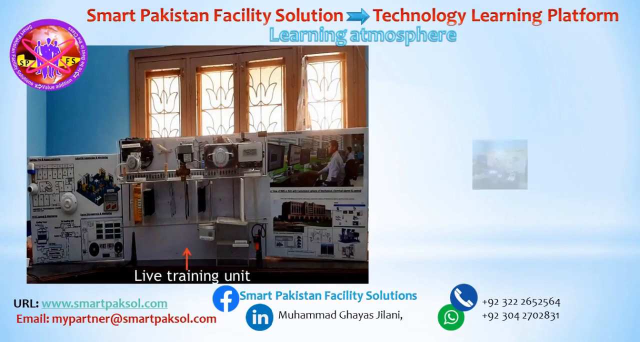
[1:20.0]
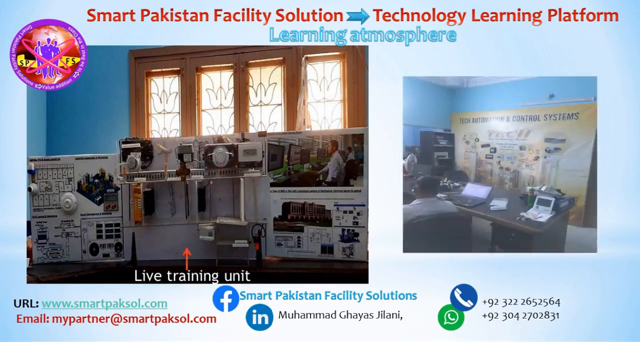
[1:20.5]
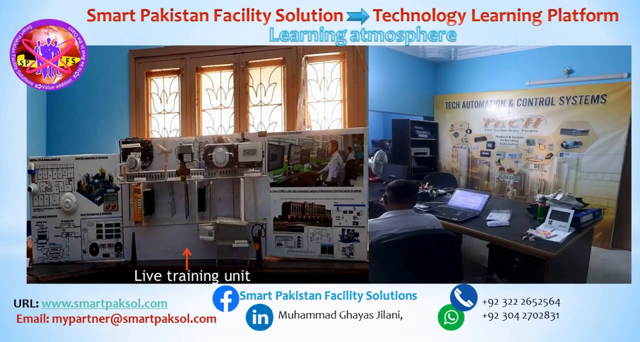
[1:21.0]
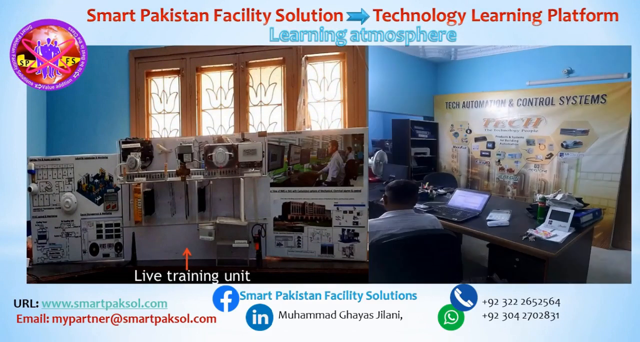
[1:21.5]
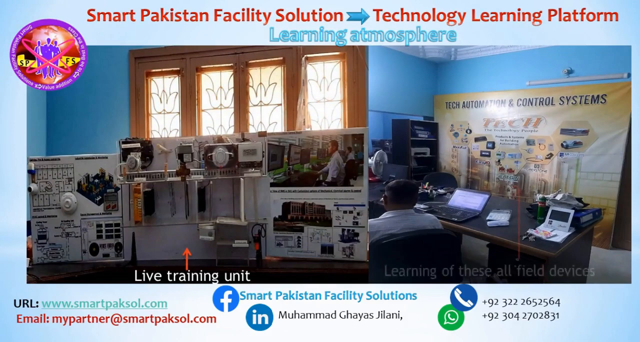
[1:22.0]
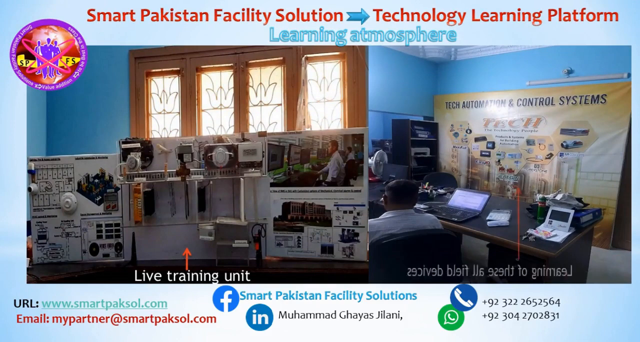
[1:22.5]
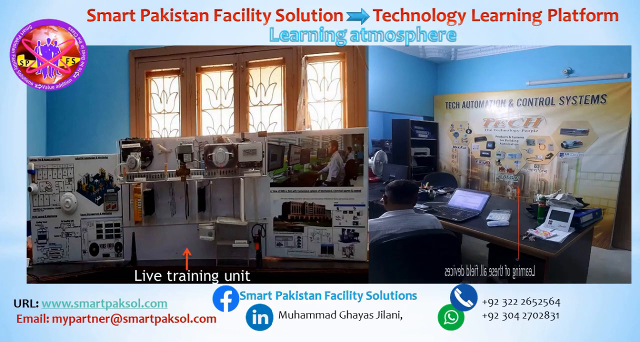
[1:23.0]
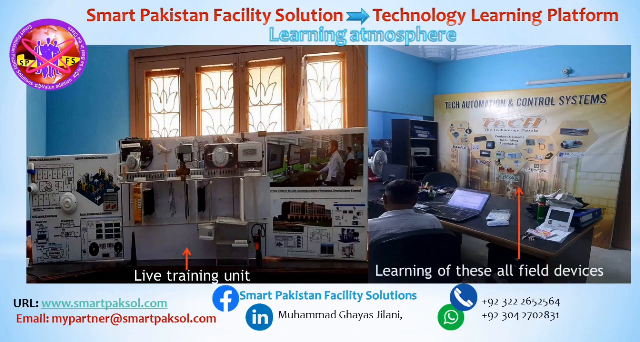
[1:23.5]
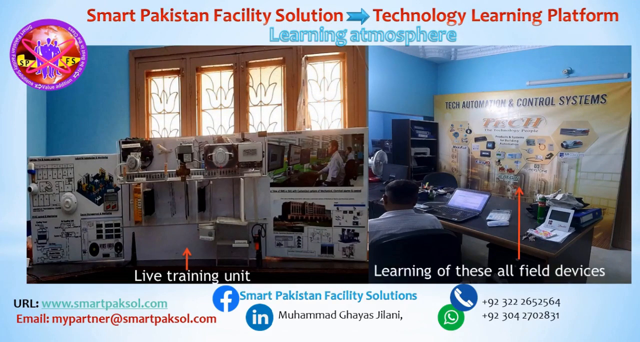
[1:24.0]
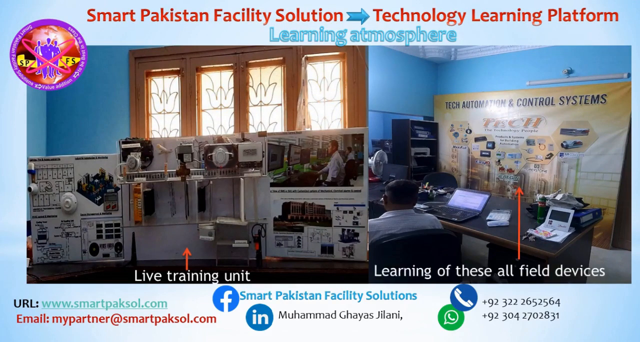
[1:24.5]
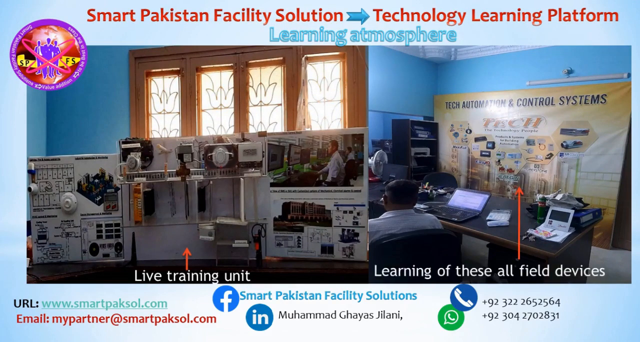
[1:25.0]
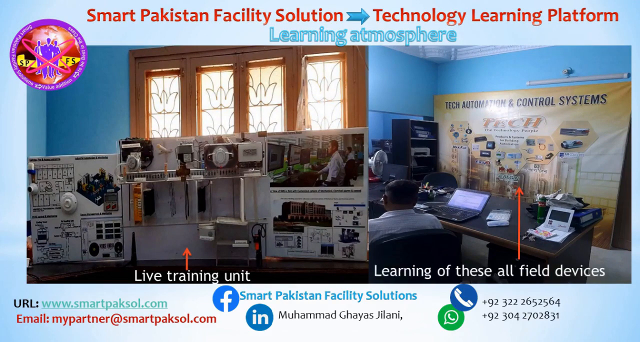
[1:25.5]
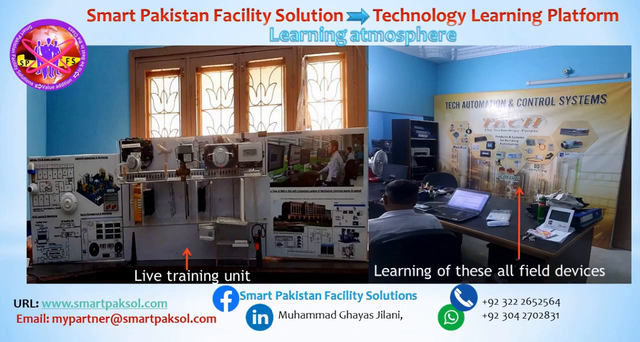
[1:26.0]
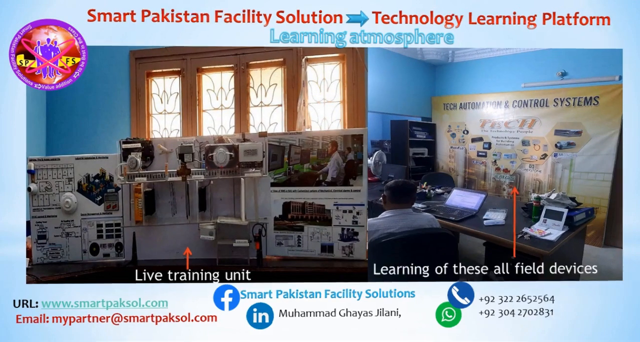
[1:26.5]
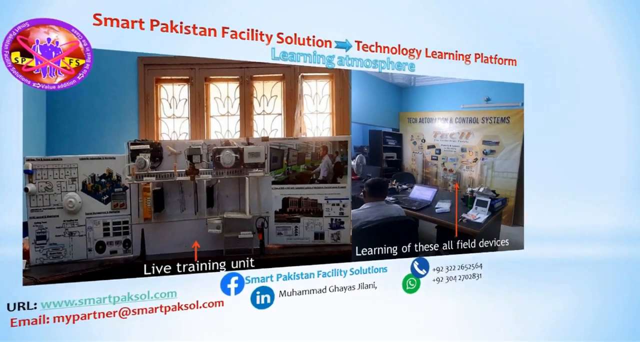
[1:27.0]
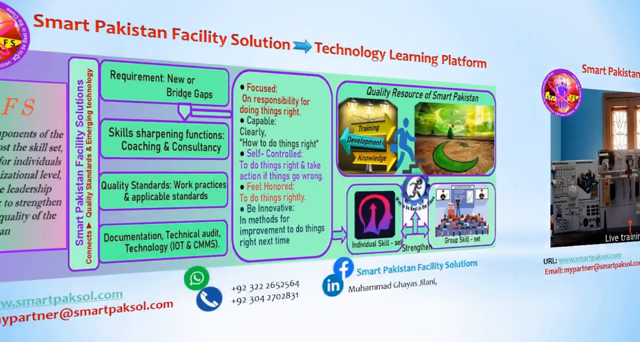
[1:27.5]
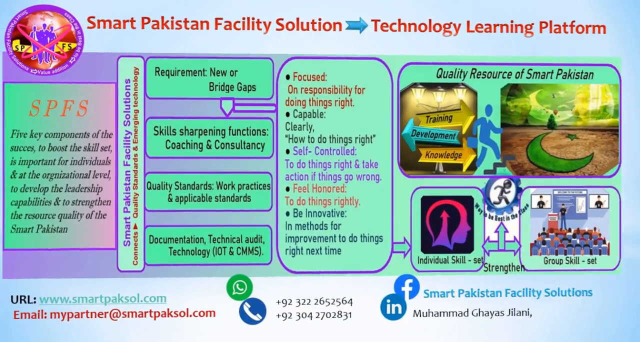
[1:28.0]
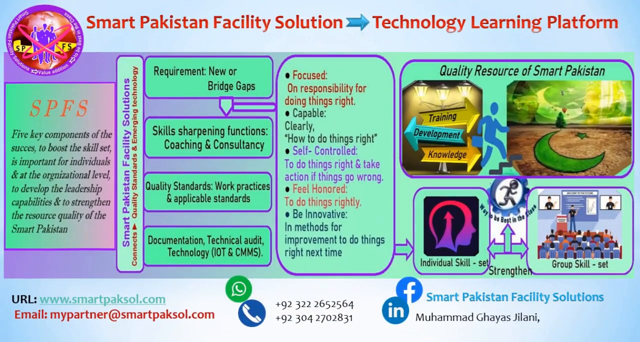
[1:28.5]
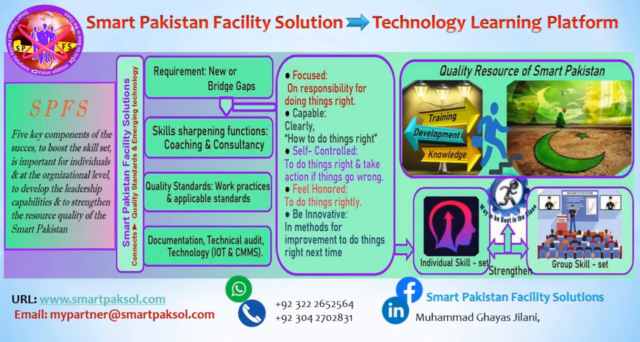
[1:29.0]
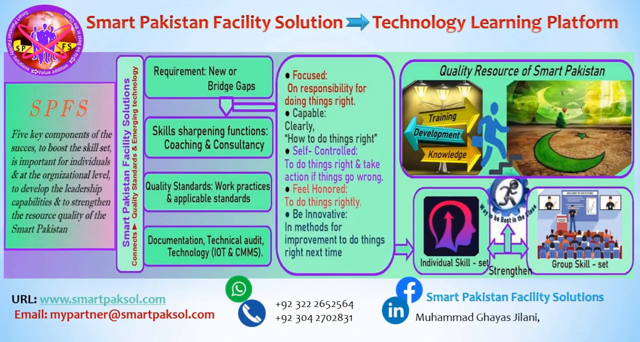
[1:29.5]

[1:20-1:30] Two new images of presentations are shown. The left one contains a poster board with a lot of interactive elements, with an orange arrow pointing to it; underneath the arrow, white text says "over the photo, live training unit". On the right is a large presentation showing different aspects of tech automation and control systems, also labeled with an orange arrow that says "learning of these field devices". The slide is labeled "learning atmosphere", and the same contact information appears at the bottom of the screen.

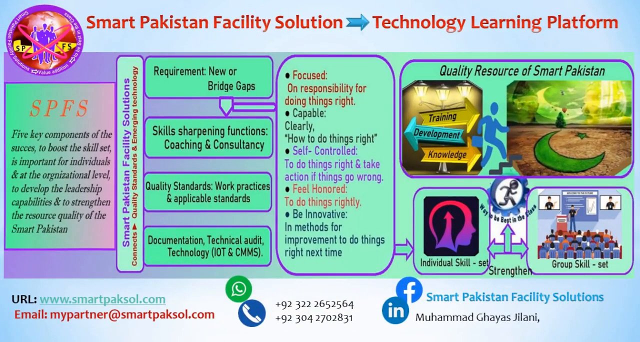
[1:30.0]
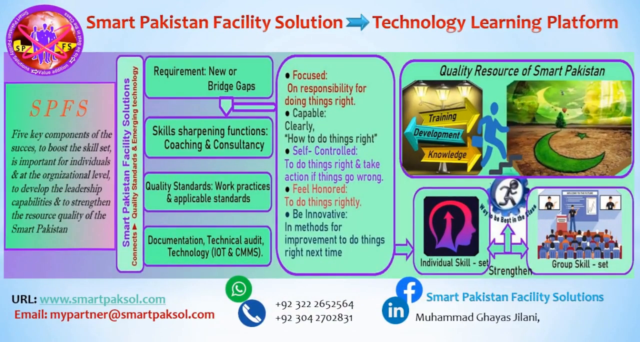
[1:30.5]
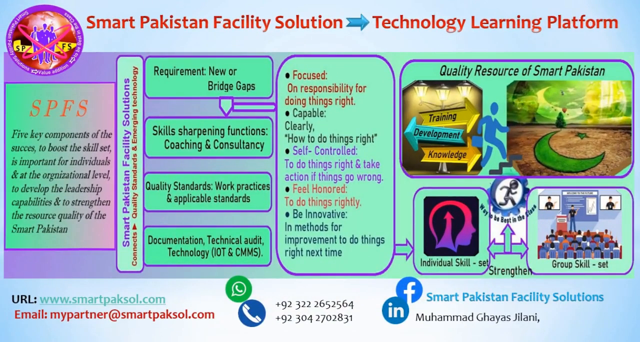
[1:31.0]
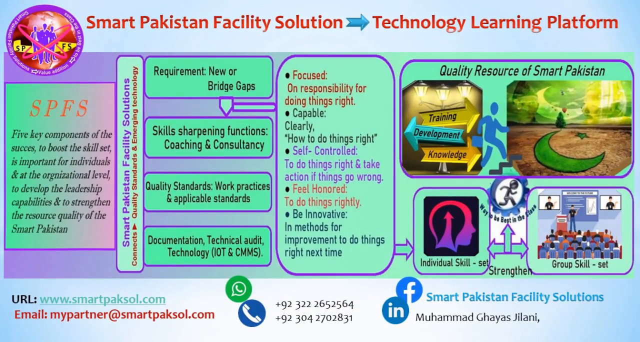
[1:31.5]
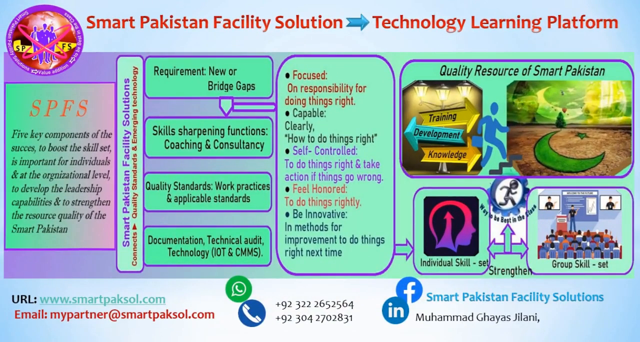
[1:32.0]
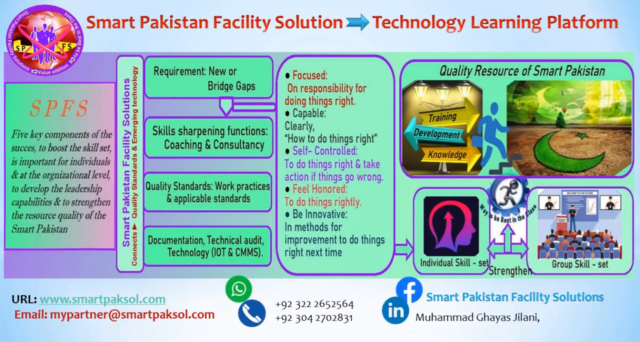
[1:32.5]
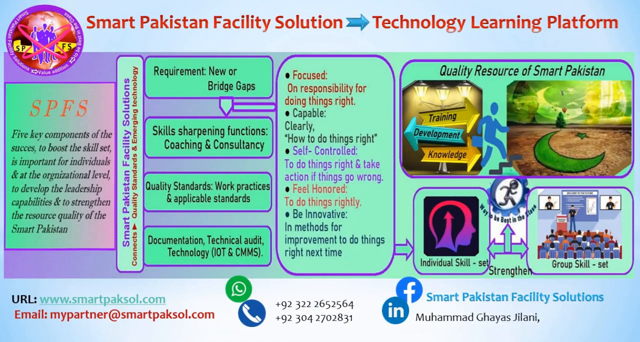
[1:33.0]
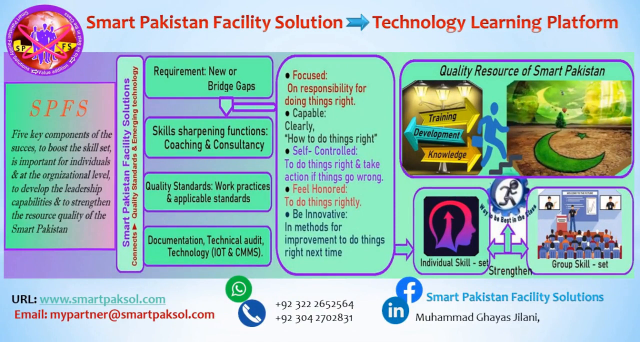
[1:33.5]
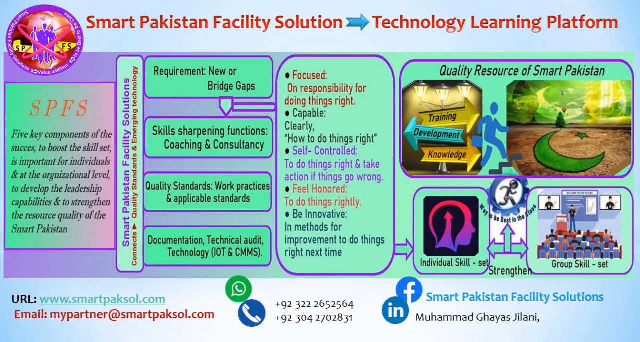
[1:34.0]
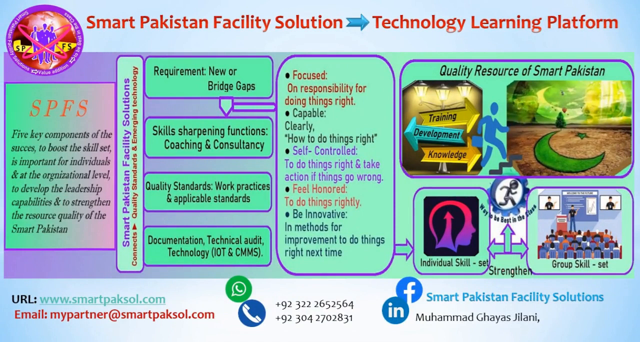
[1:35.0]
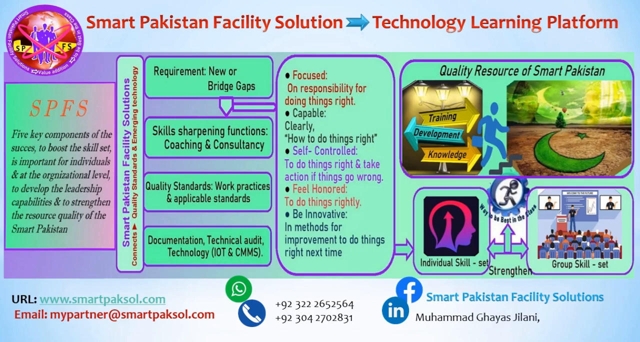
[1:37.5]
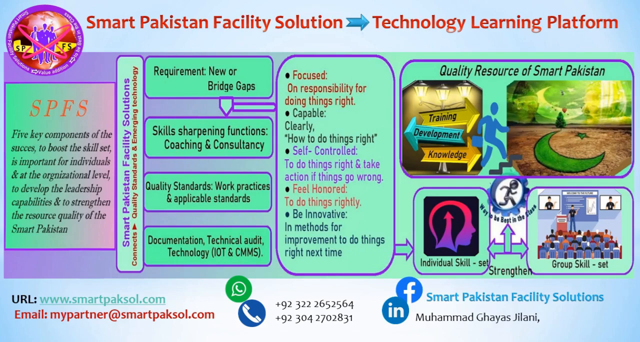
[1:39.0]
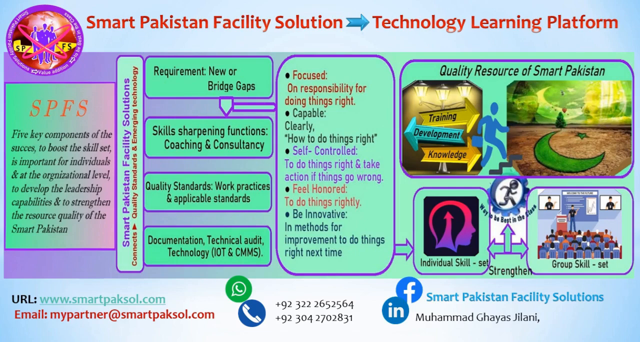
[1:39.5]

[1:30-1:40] The presentation shows a flowchart with a lot of different information, presenting five key components of success to boost the skill set. A bullet point list in the chart contains the five components: focused, capable, self-controlled, feel honored, and be innovative. Boxes on the right side of the flowchart say "Quality Resource of Smart Pakistan", "individual skill set" and "group skill set". The same contact information as on the previous slide is at the bottom of the screen.